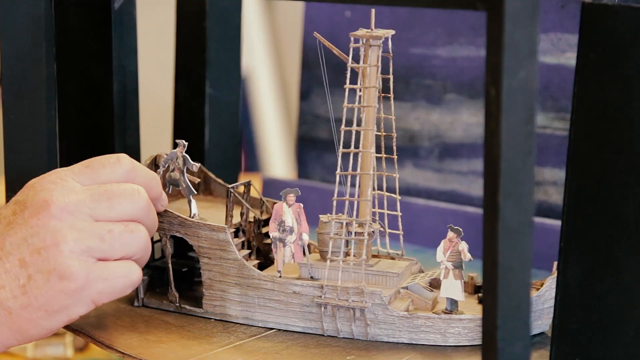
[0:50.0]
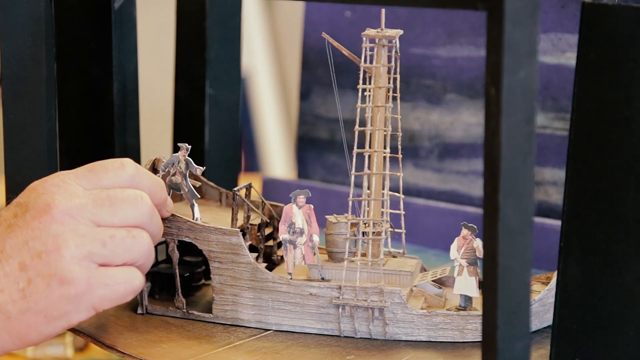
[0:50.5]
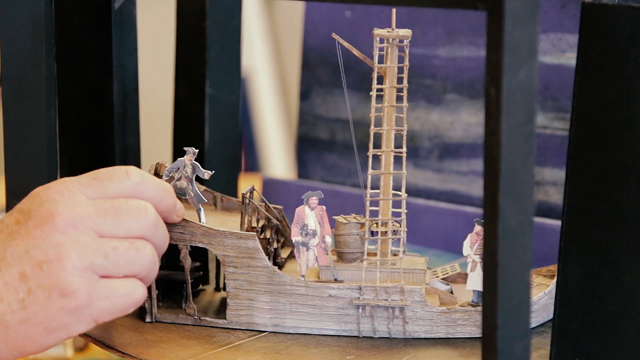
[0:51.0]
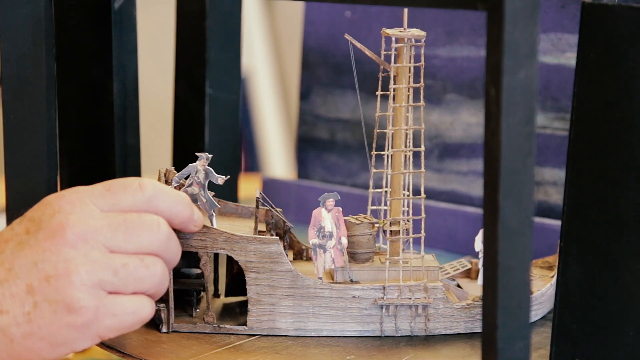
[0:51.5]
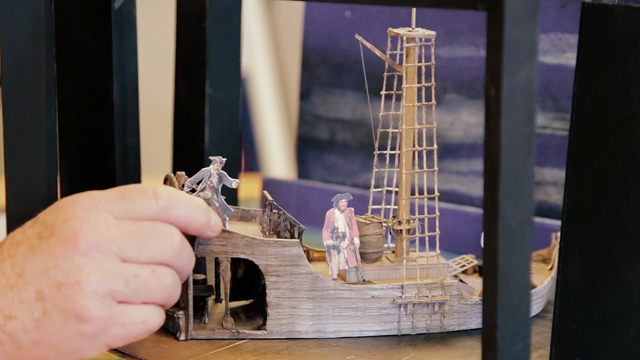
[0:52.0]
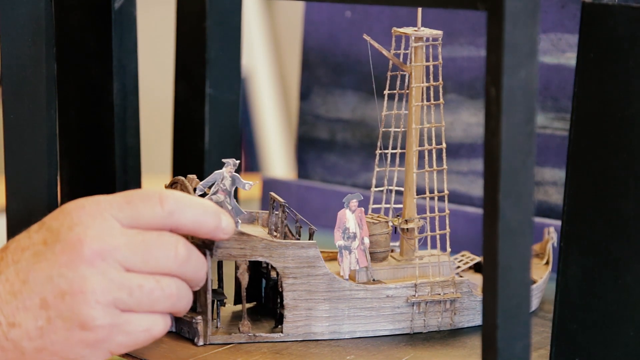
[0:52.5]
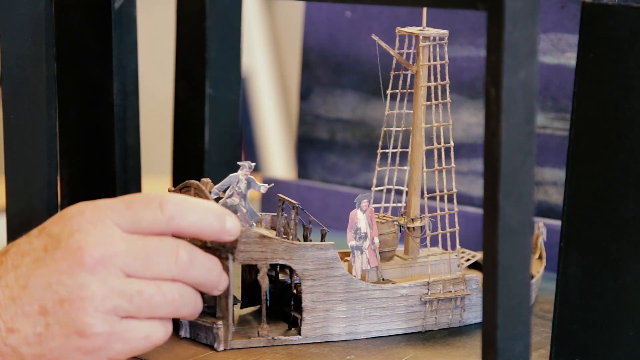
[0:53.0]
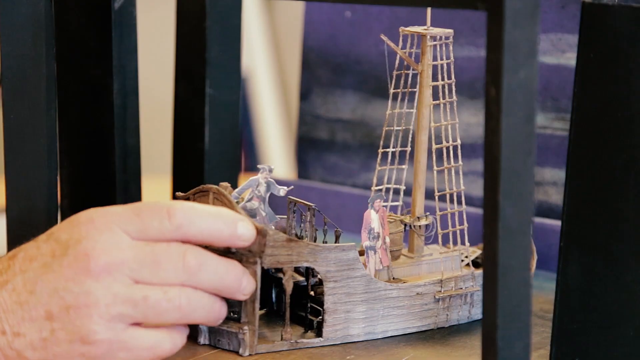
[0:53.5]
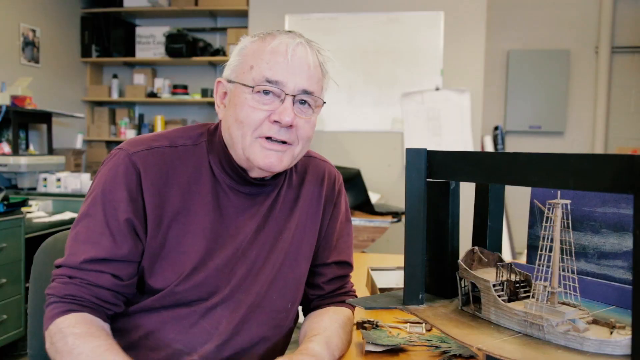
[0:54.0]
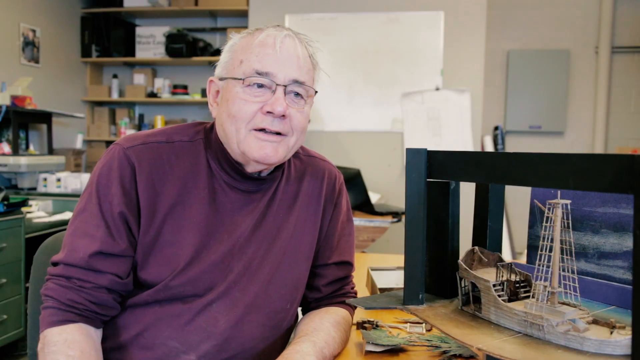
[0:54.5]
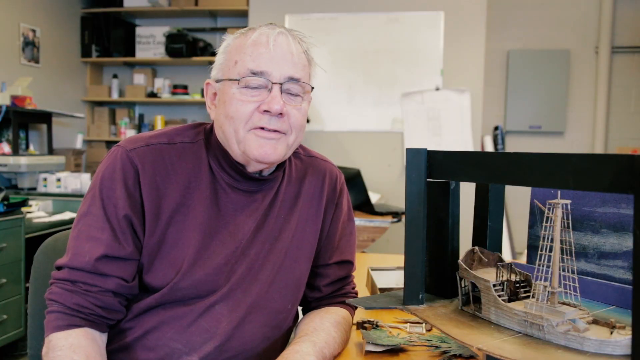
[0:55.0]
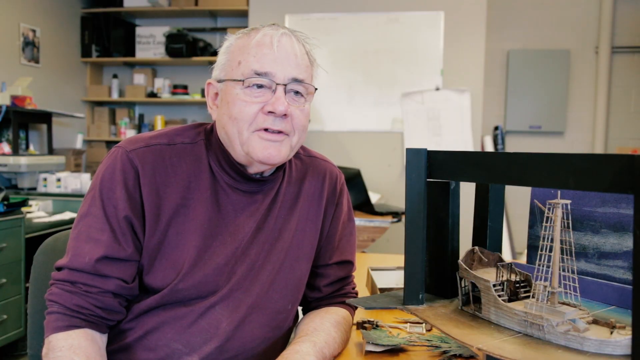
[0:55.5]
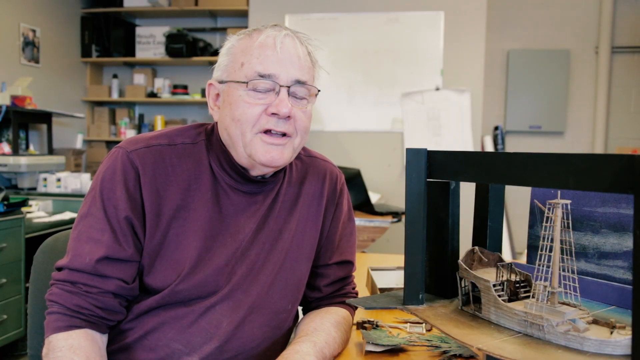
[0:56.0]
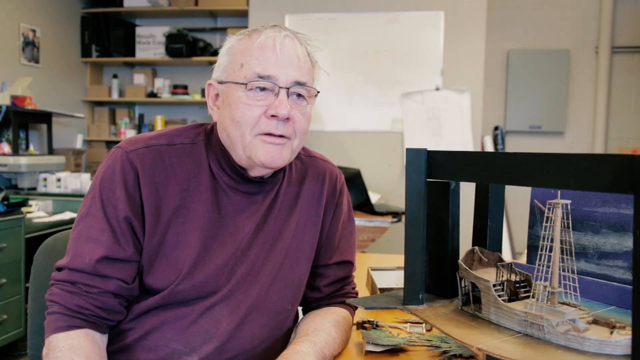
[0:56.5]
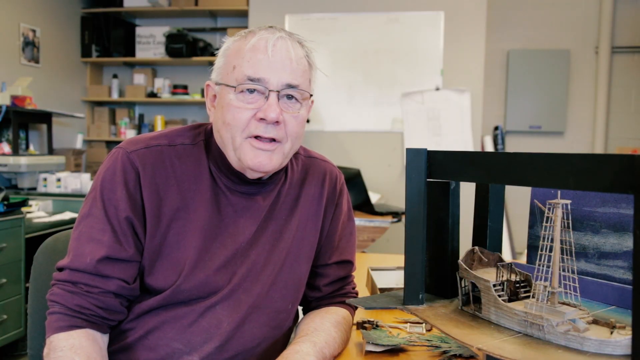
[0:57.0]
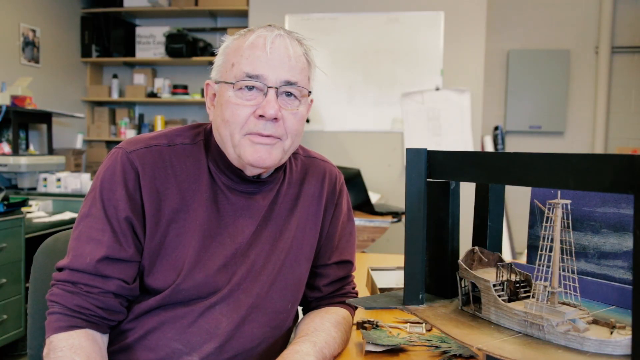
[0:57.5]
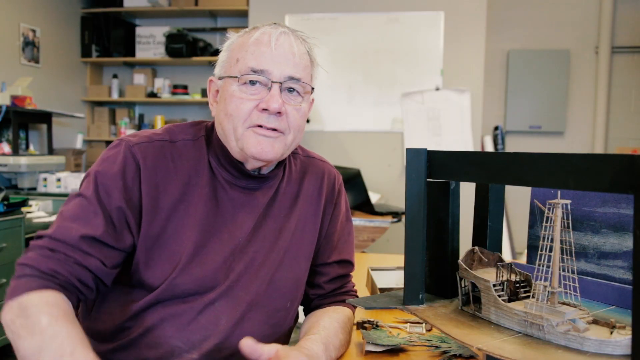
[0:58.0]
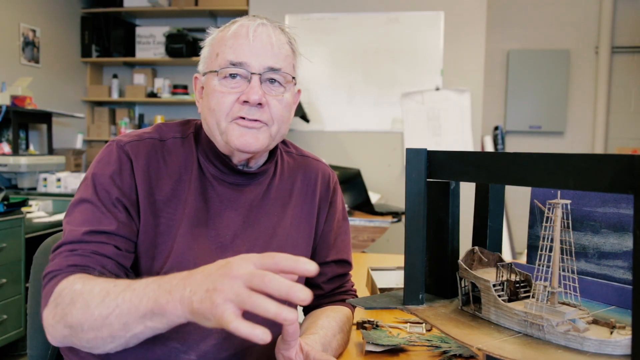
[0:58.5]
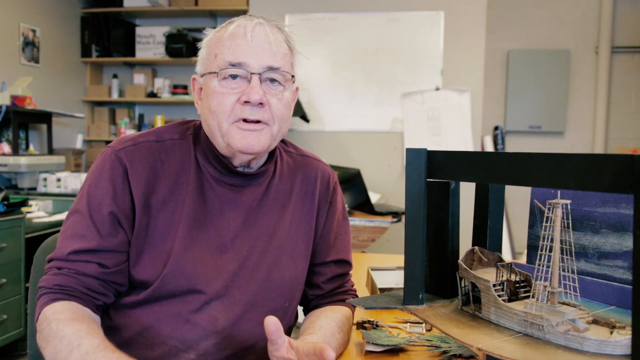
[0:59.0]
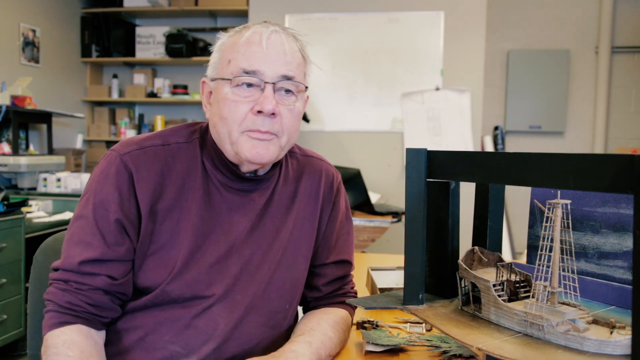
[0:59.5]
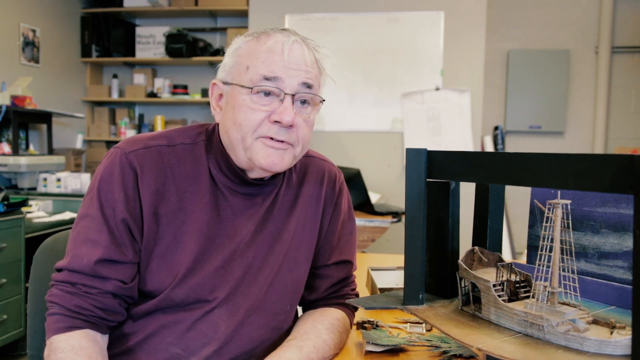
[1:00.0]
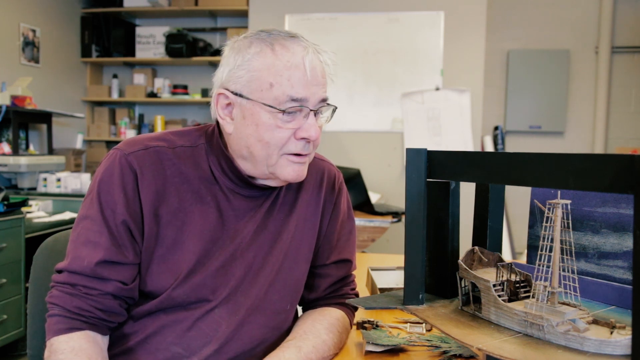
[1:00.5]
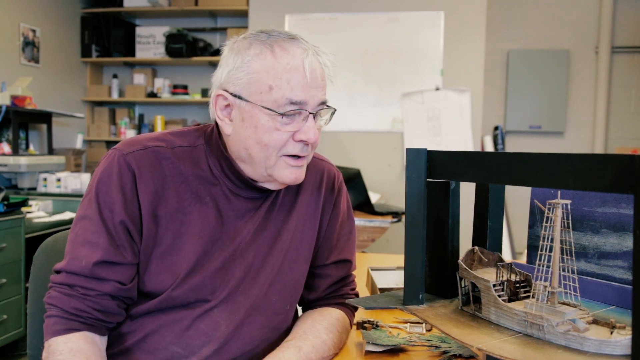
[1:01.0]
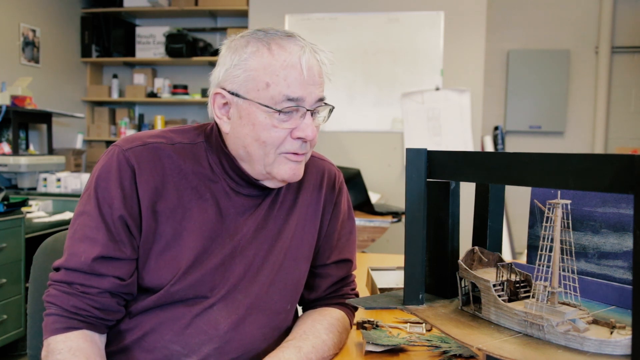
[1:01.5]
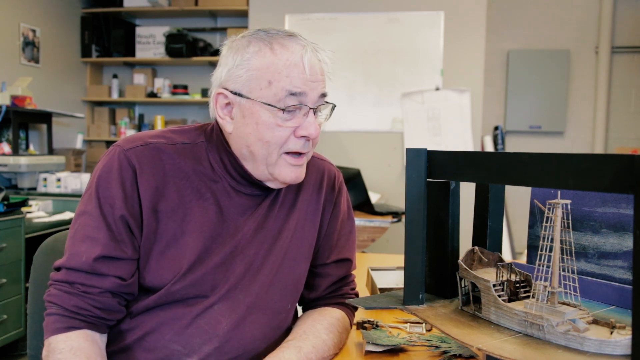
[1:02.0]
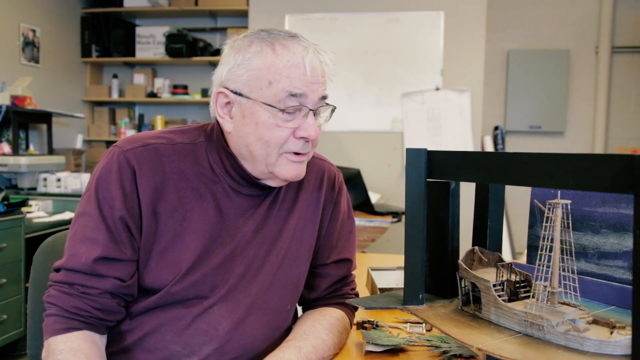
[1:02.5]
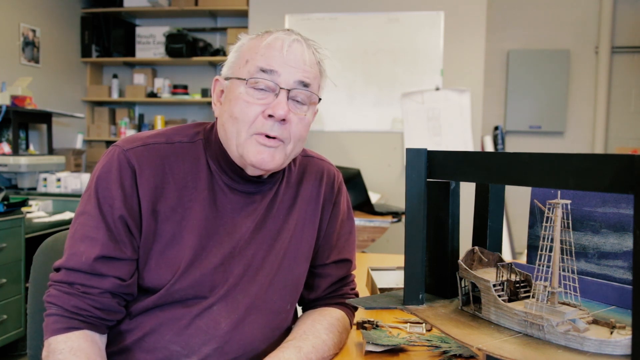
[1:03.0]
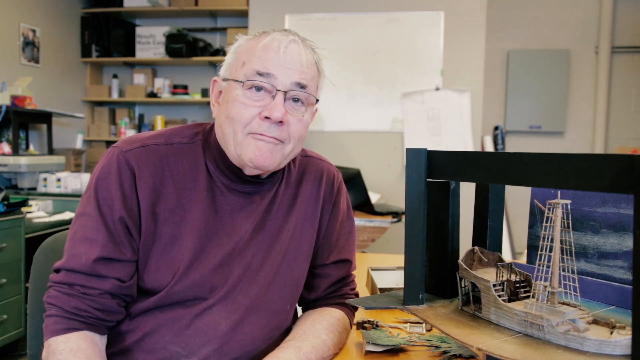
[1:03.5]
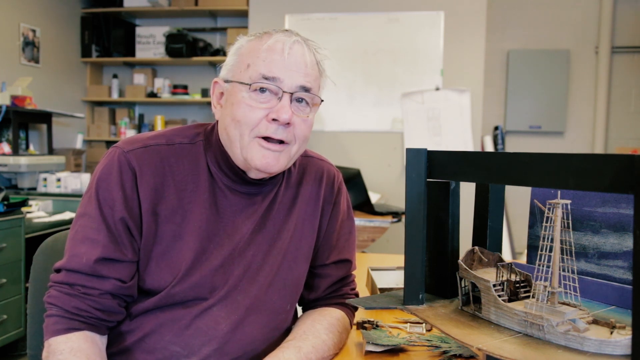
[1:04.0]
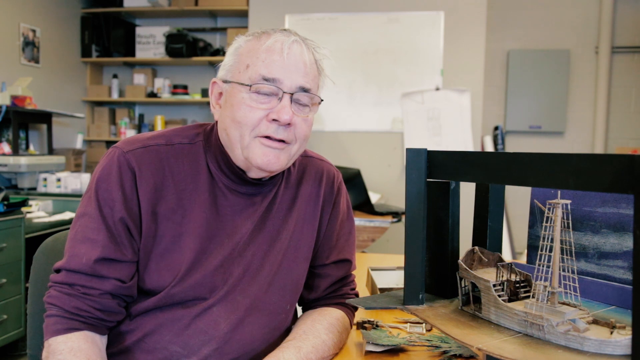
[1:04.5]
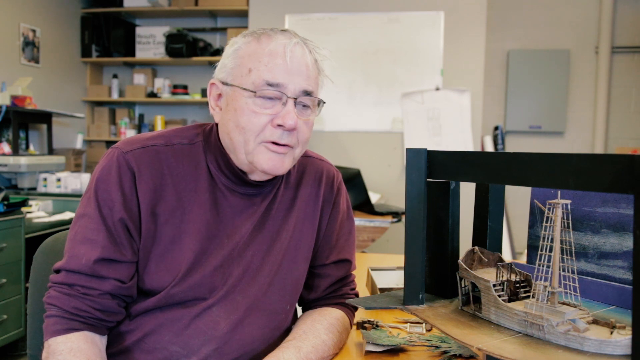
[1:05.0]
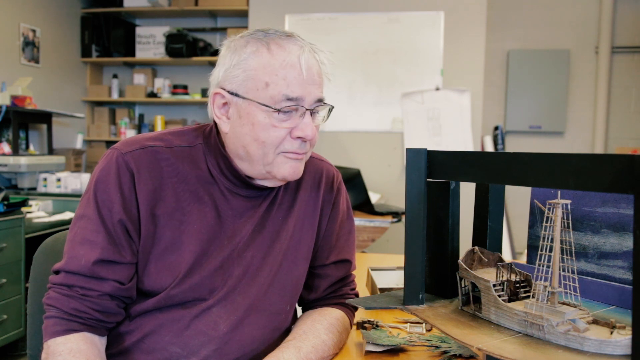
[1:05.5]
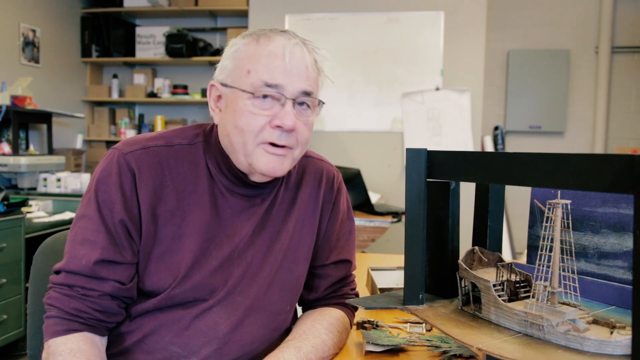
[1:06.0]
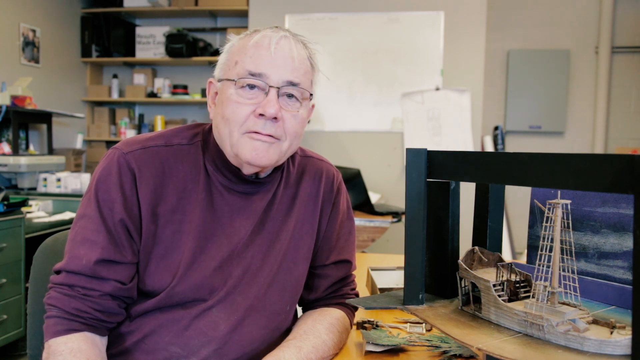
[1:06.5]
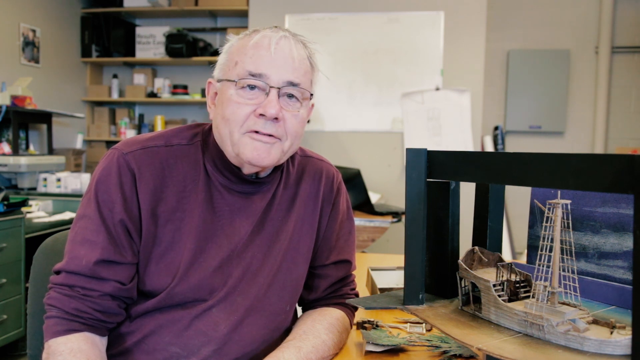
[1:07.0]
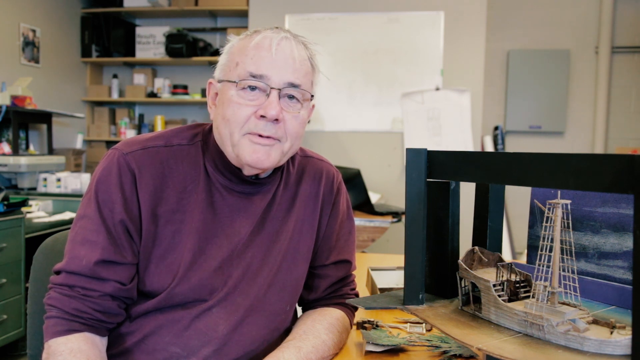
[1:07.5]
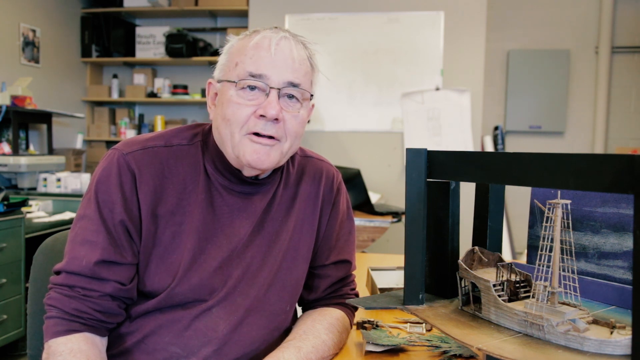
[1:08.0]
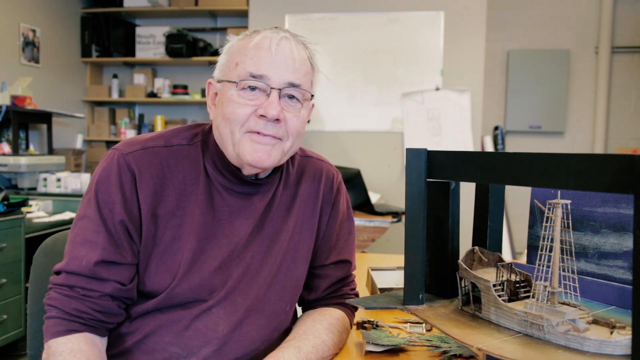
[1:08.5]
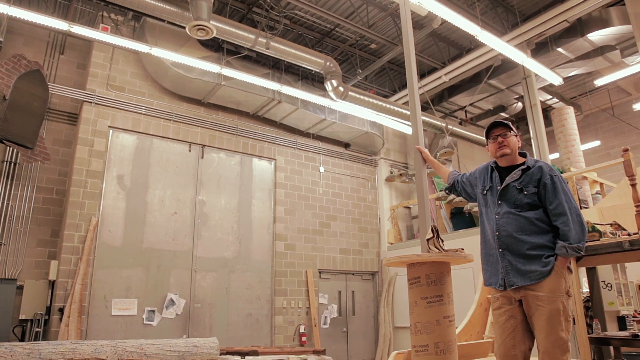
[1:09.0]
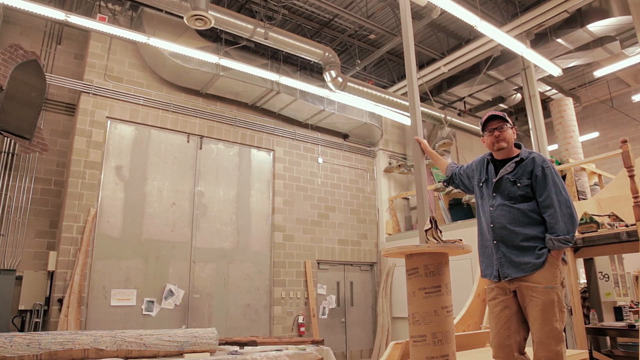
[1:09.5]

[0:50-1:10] A ship is shown, with two men standing in a tall tower. The setting looks like a studio. An old man with brown hair, wearing trousers and a green t-shirt, is seen talking and smiling while looking at the couple on the ship. Toward the end, a man wearing brown trousers is seen standing and leaning on a wall; he seems to be at his studio. In the background are some carpentry shelves, and it seems like he is sitting at his work office. The old white man is still talking, looking at and admiring the ship that is on the table next to him.